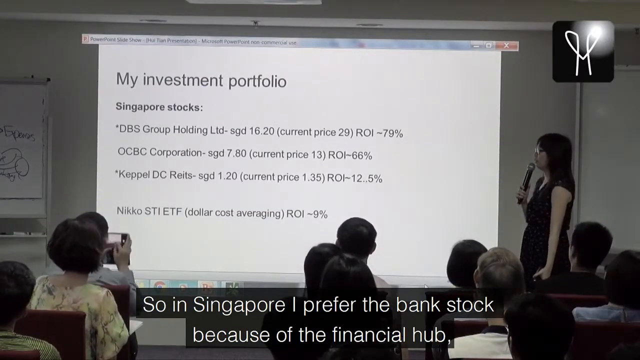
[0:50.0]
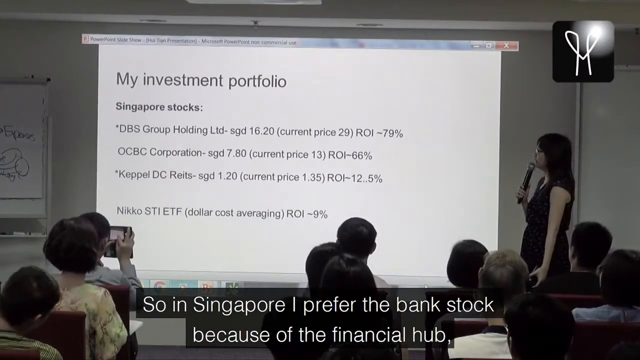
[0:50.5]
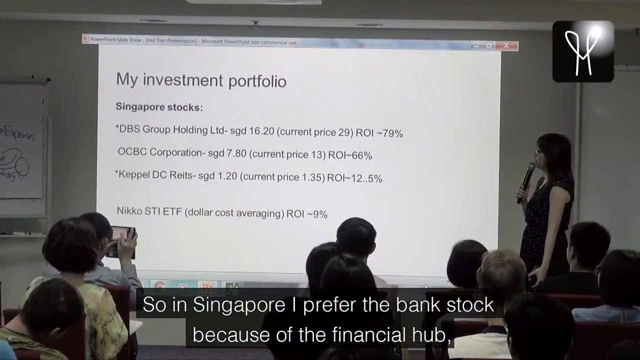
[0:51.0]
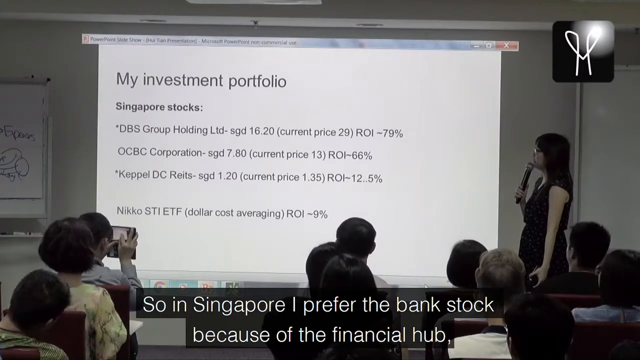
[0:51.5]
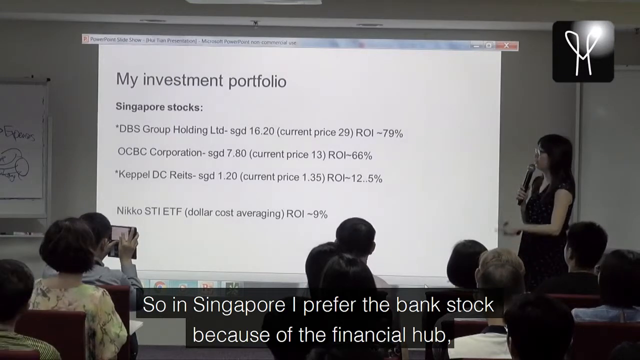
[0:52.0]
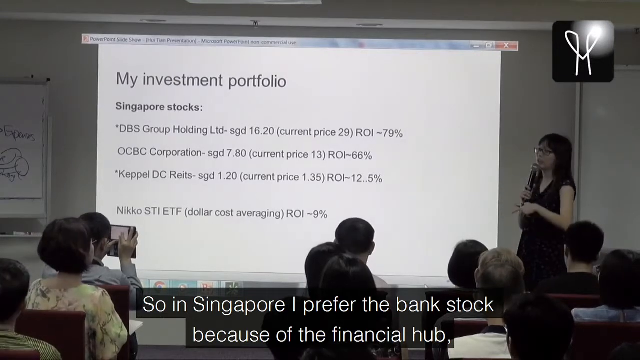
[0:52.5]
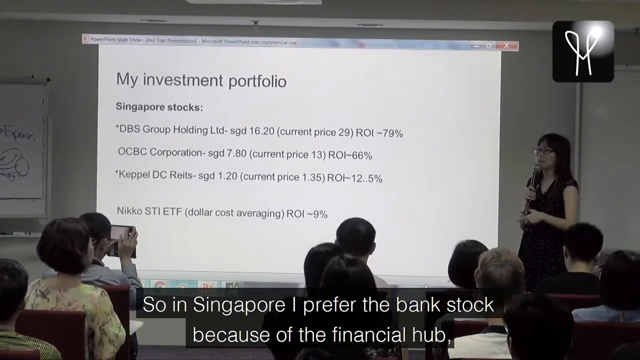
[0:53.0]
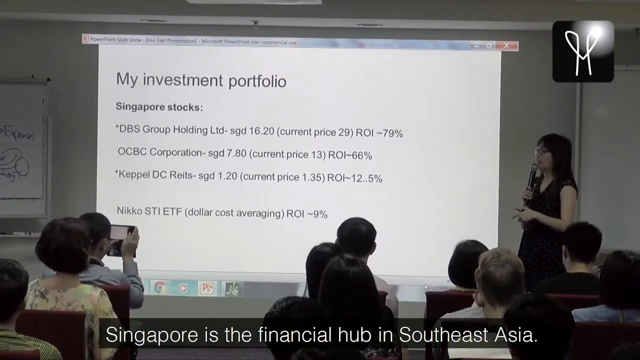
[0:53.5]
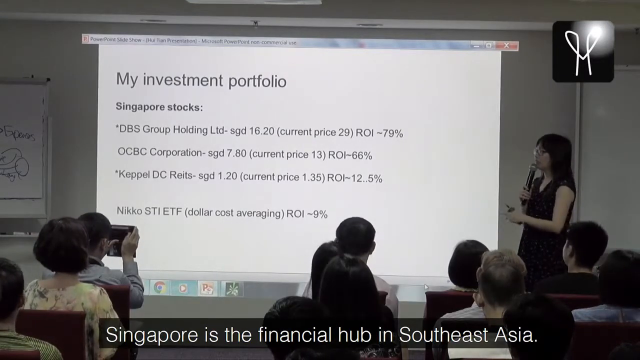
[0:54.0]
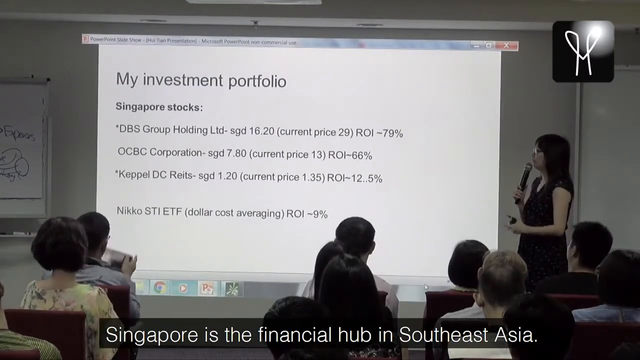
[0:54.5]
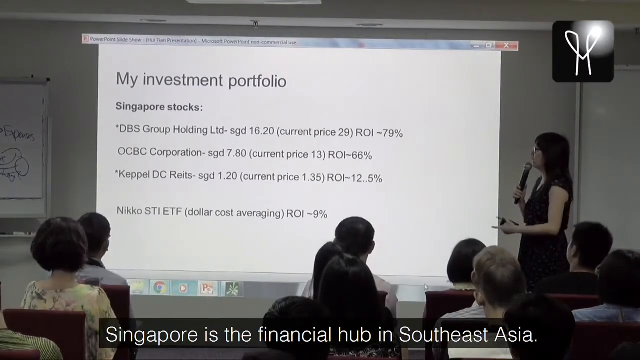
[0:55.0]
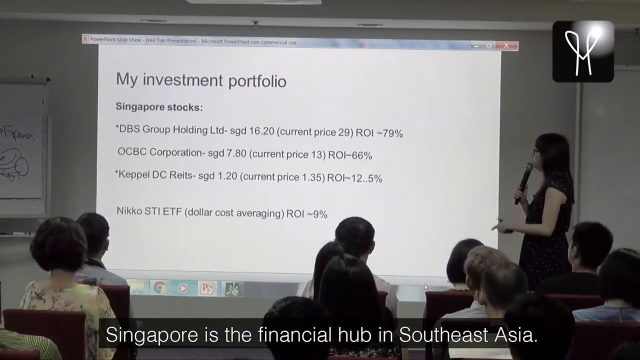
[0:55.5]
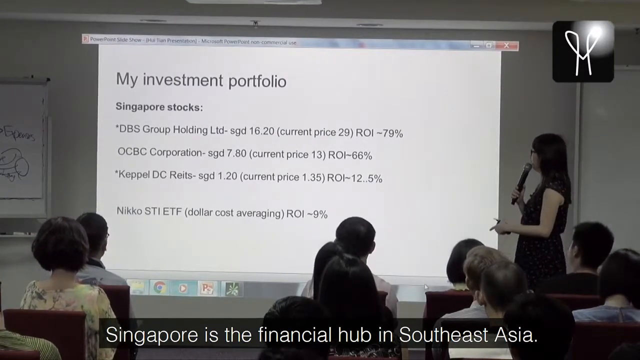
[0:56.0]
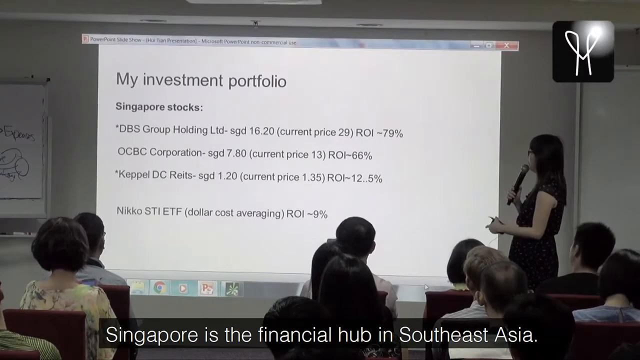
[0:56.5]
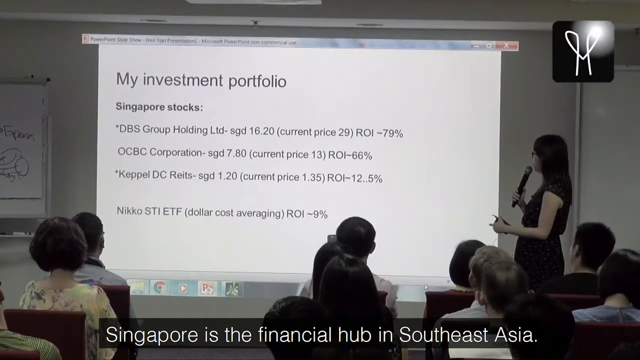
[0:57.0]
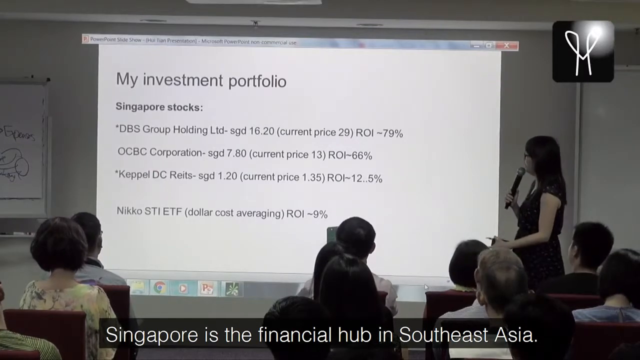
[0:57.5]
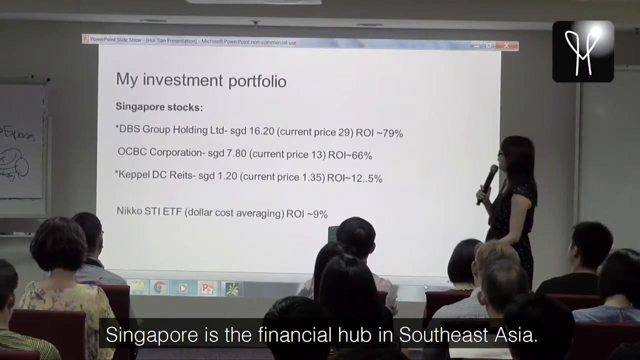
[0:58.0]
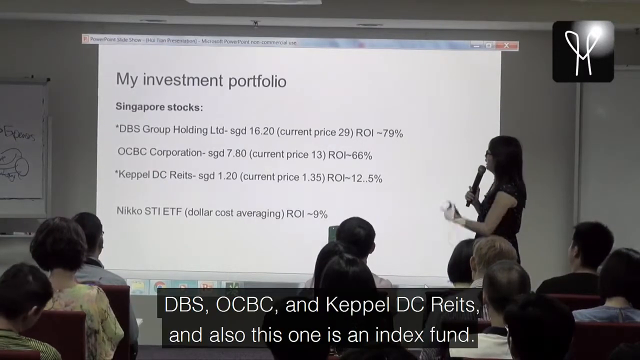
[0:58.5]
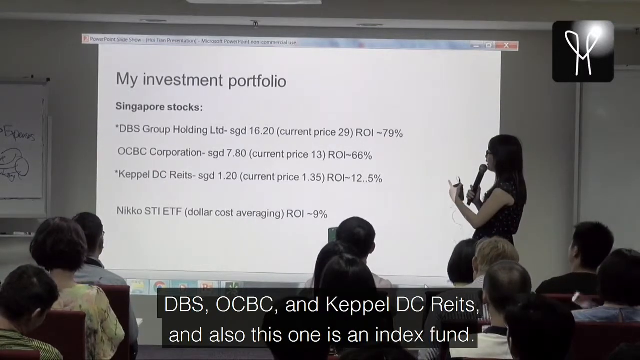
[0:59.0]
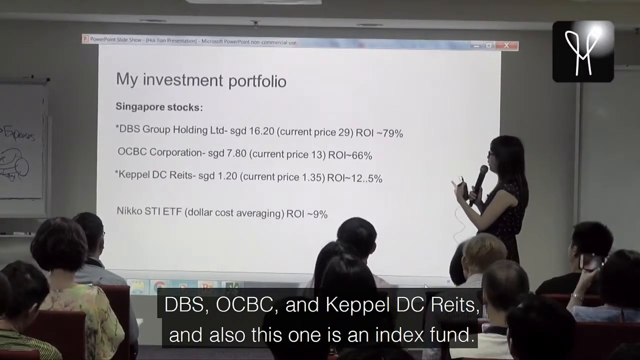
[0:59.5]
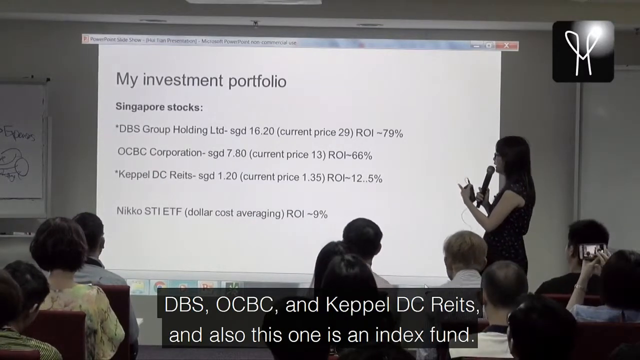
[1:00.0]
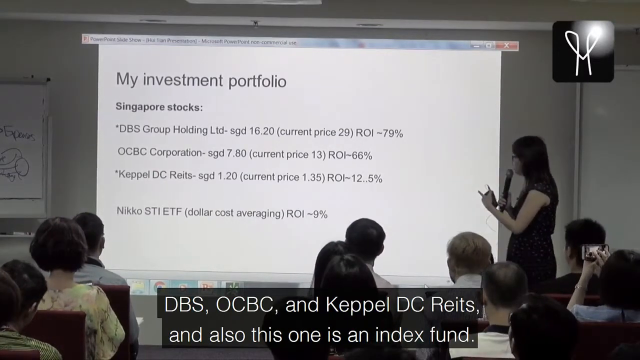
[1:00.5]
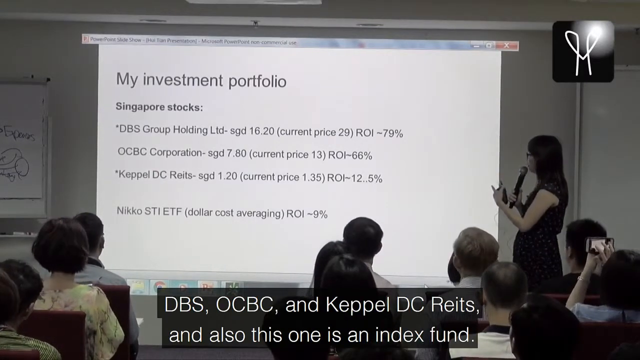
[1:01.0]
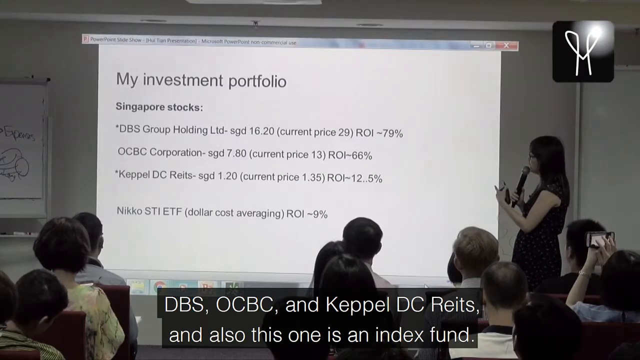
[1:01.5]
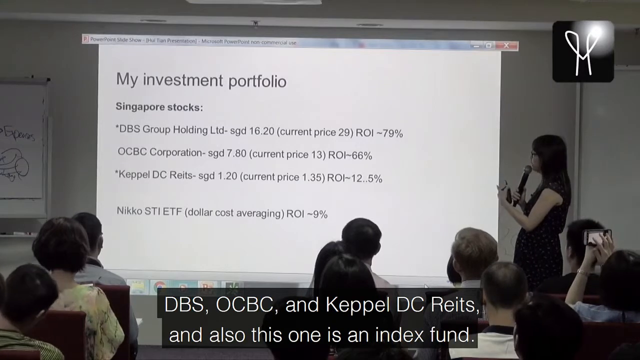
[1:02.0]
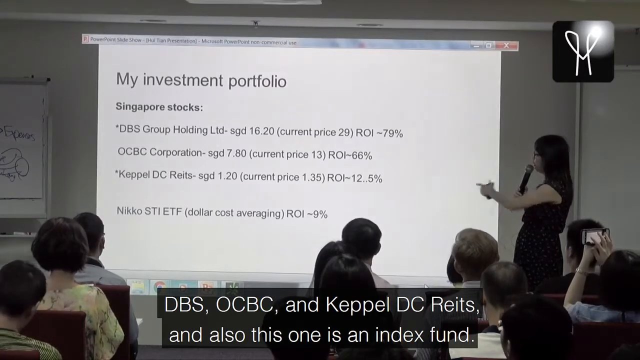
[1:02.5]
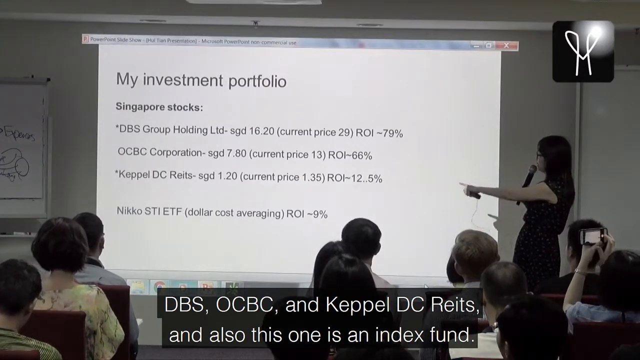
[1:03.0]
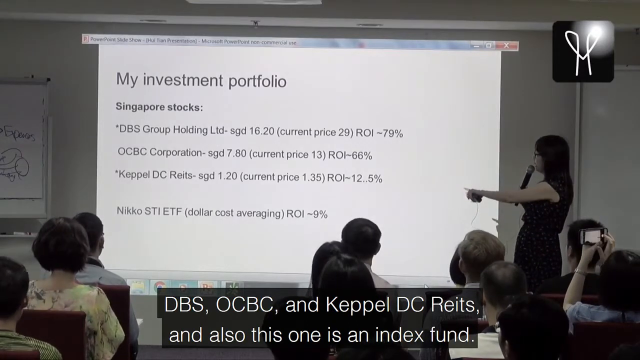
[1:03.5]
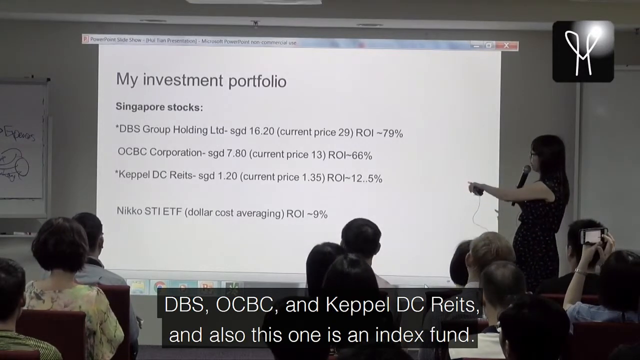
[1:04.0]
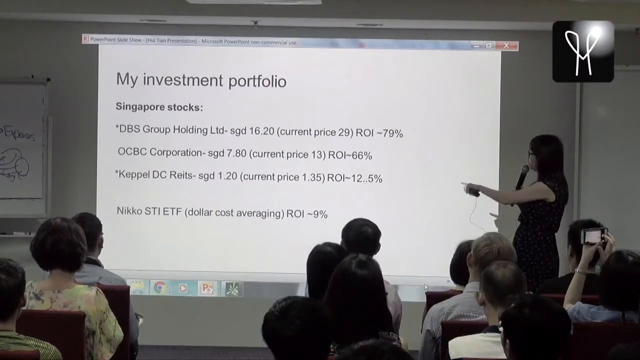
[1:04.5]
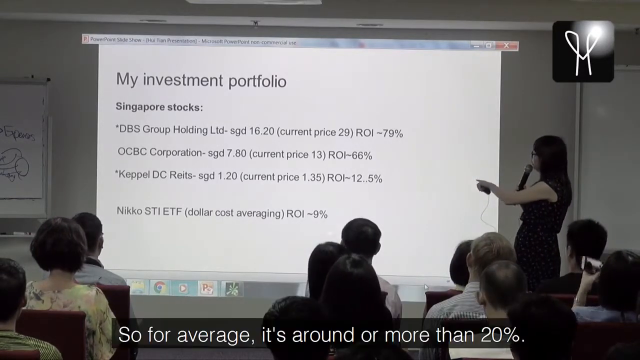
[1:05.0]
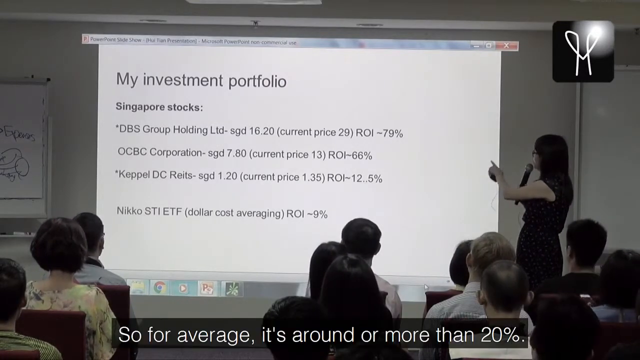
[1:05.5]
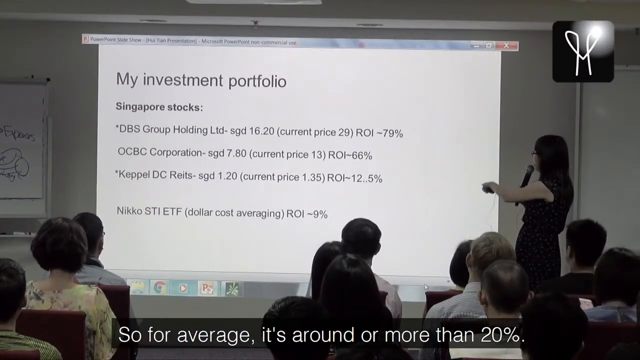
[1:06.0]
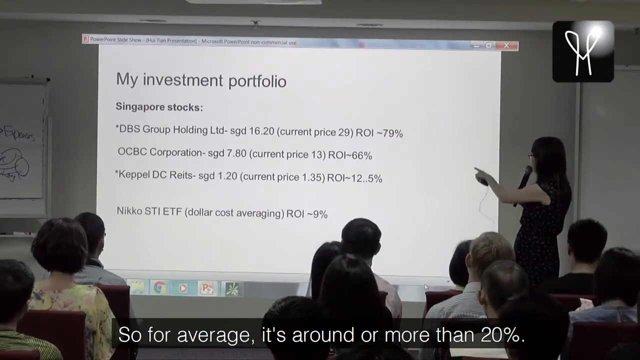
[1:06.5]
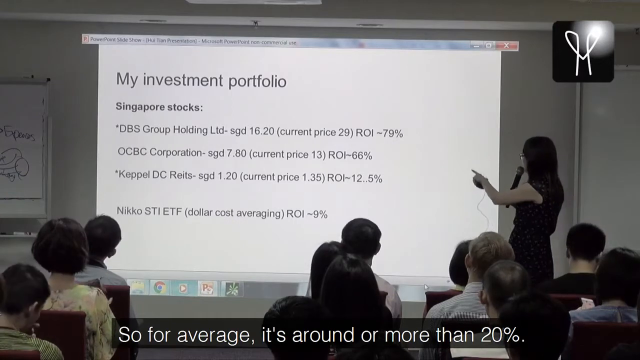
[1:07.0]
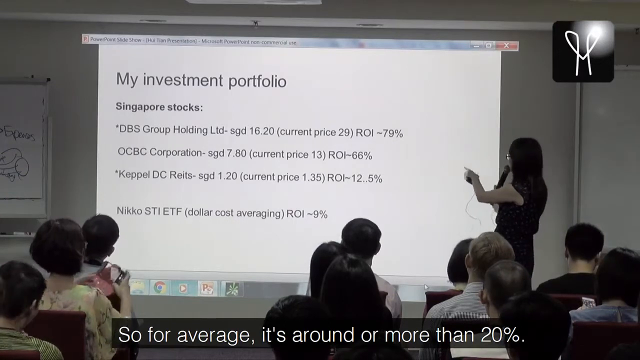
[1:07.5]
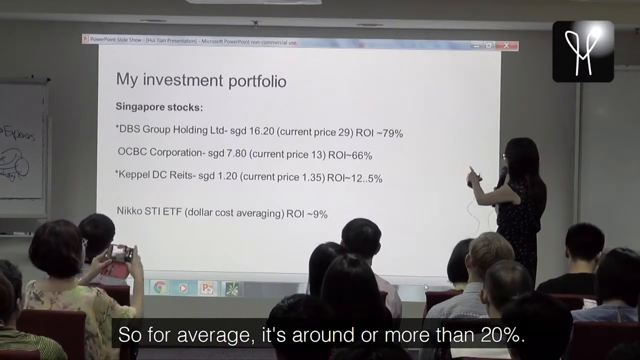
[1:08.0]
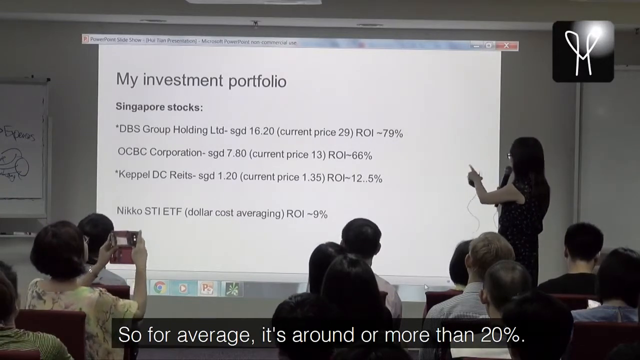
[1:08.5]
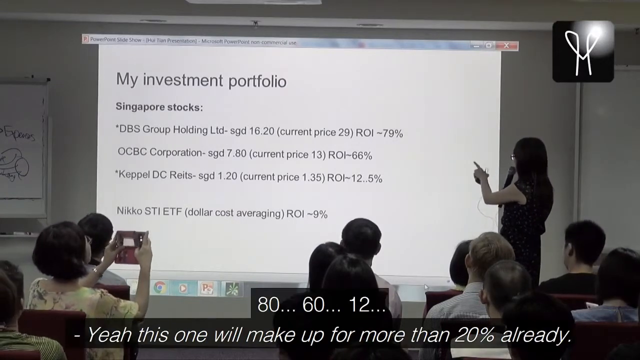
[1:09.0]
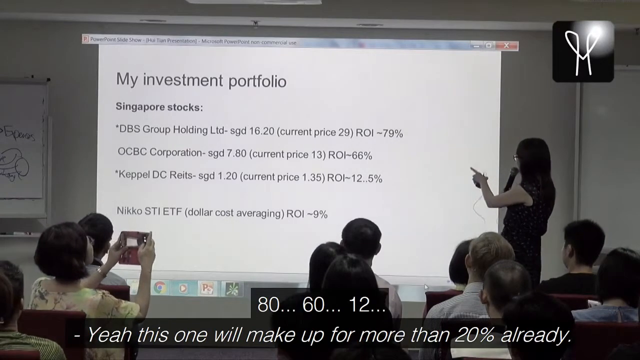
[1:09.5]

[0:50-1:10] The presenter shows a slide titled "My Investment Portfolio". It lists Singapore stocks such as "DBS Group Holding" and "OCBC Corporation", among others, and each stock shows some metrics and an ROI. The stock with the highest ROI is "DBS Group Holding", at 79%. While the presenter talks, a man in the first row on the left, on the first chair, is filming or taking pictures of the presentation, and then he stops. The presenter keeps pointing at the presentation on the wall and seems to explain each point one by one. In the bottom right corner, a woman holds her phone up high, seemingly filming or taking pictures of the presentation.